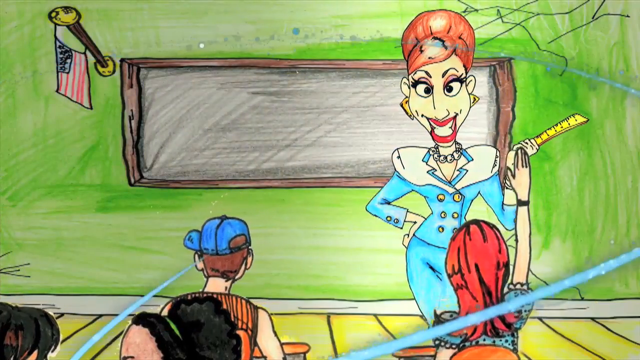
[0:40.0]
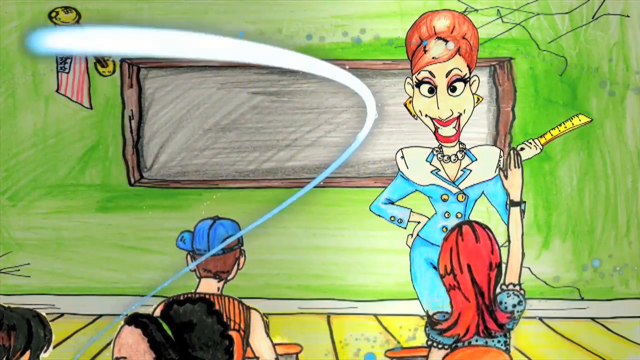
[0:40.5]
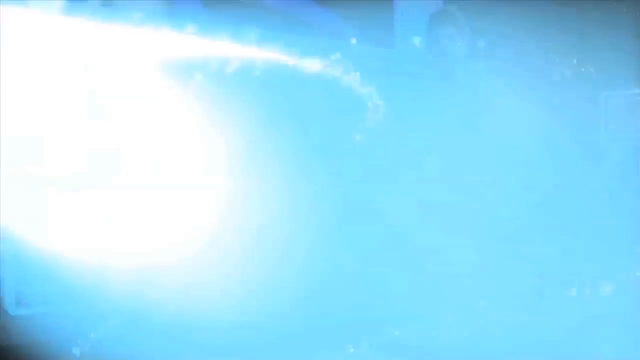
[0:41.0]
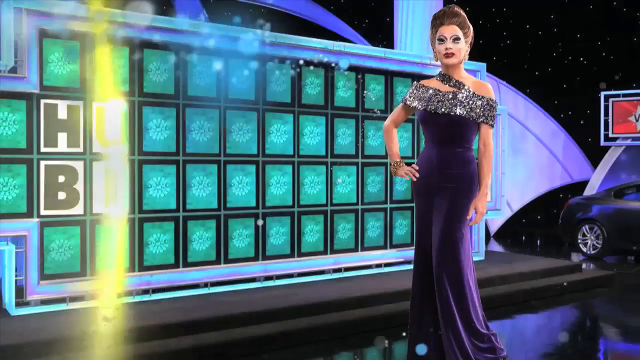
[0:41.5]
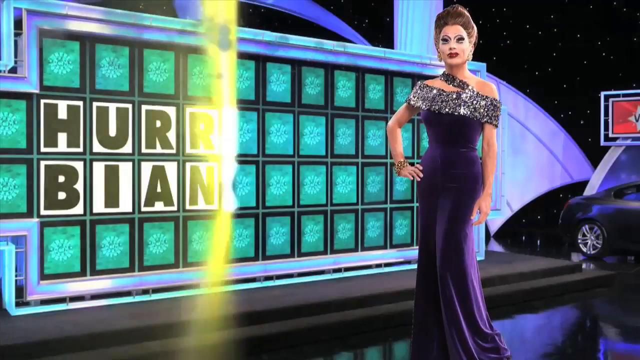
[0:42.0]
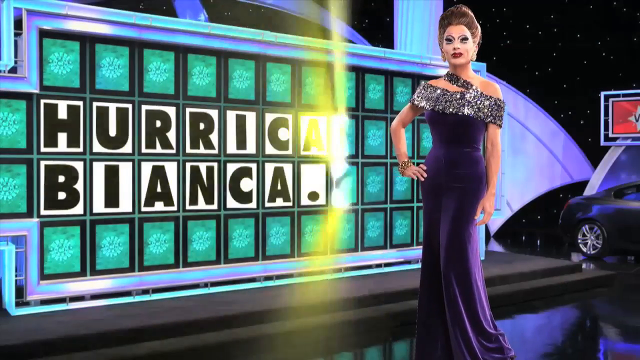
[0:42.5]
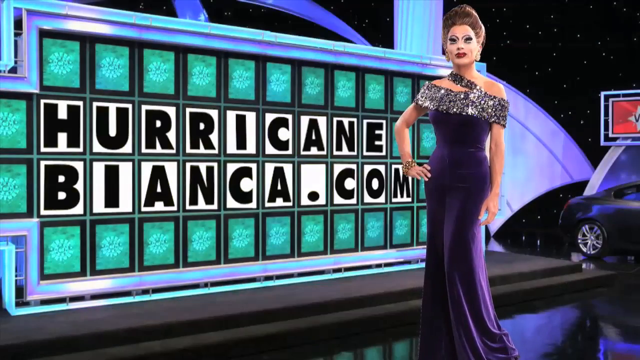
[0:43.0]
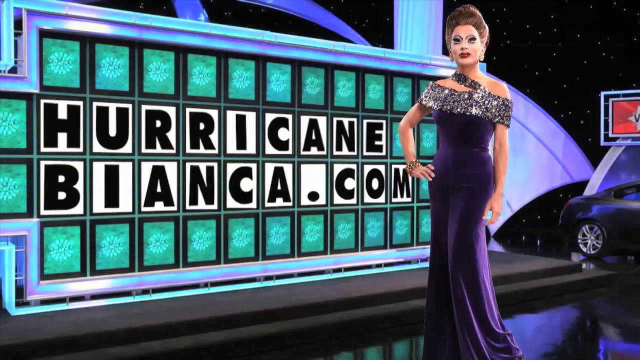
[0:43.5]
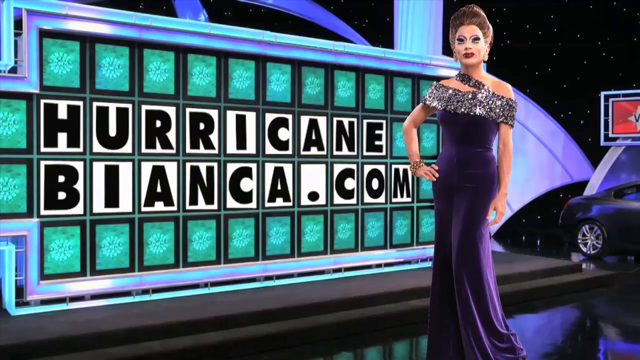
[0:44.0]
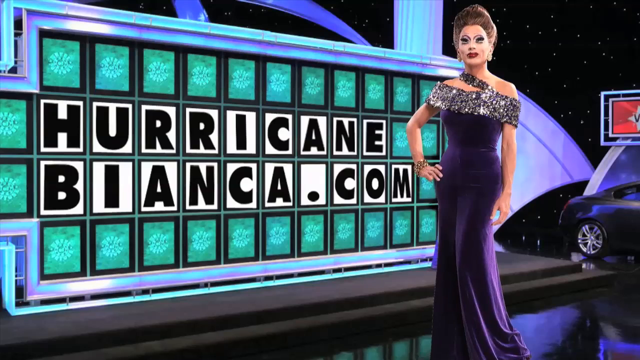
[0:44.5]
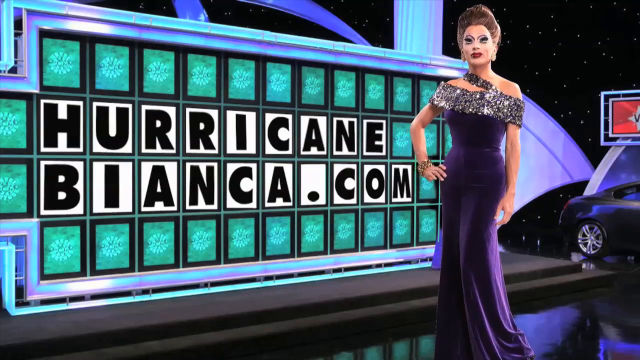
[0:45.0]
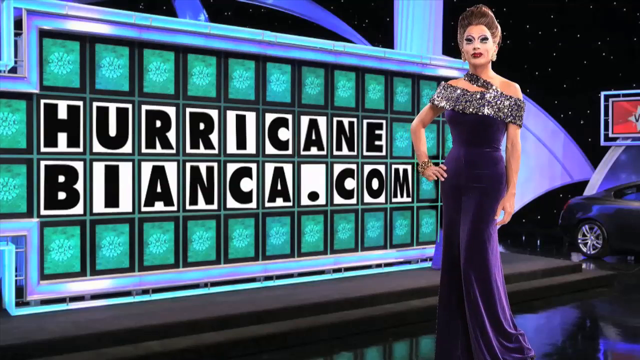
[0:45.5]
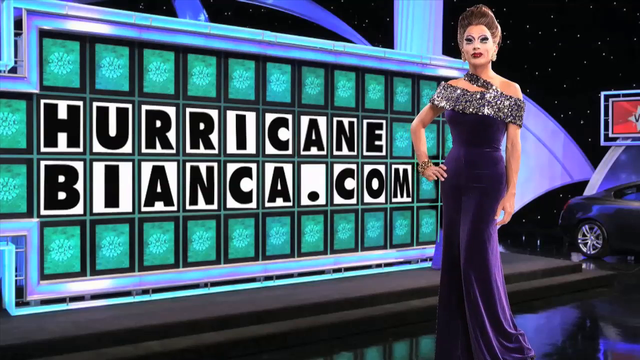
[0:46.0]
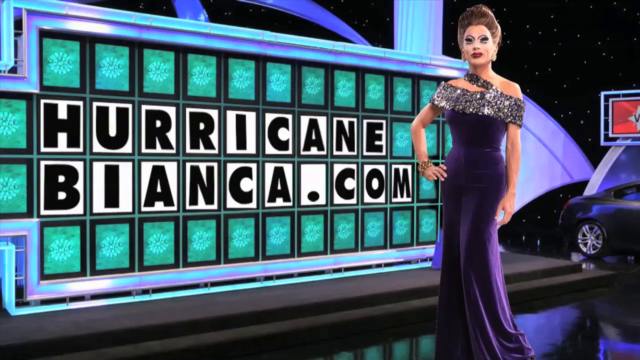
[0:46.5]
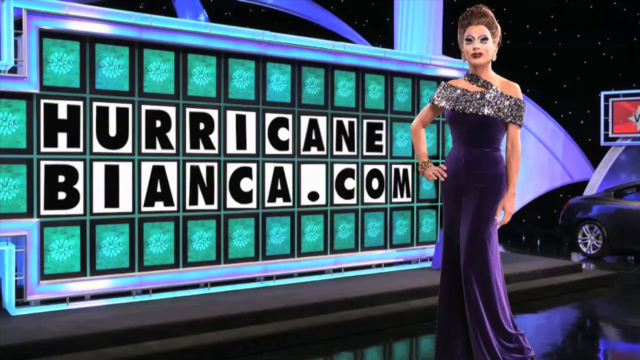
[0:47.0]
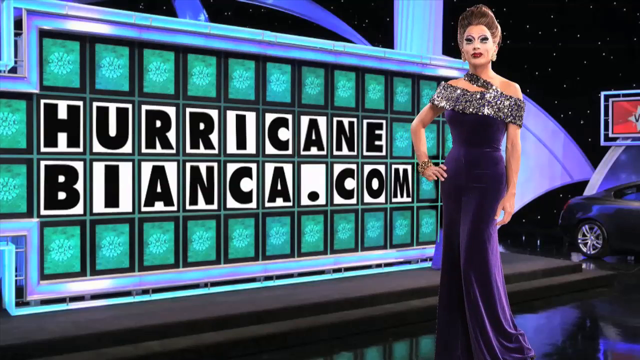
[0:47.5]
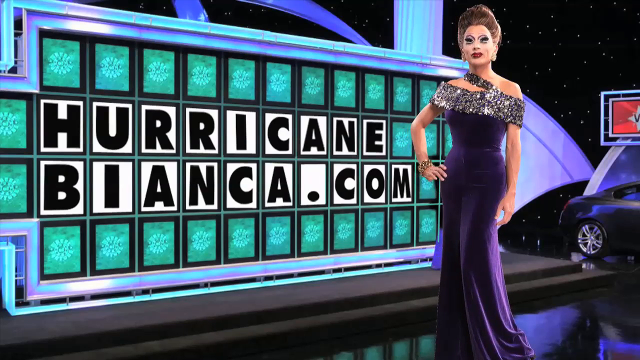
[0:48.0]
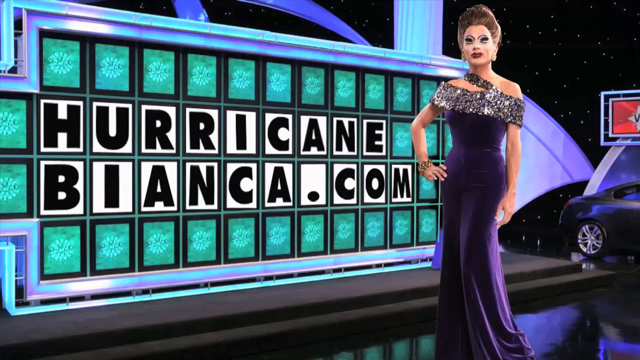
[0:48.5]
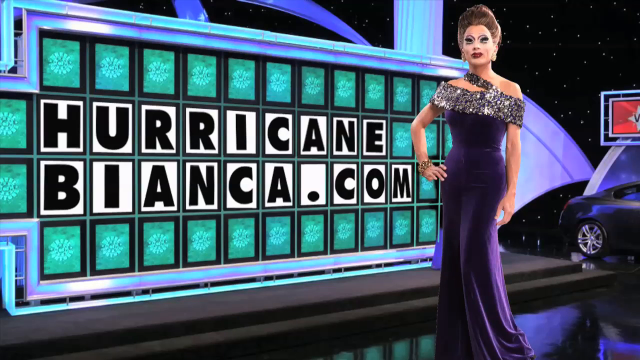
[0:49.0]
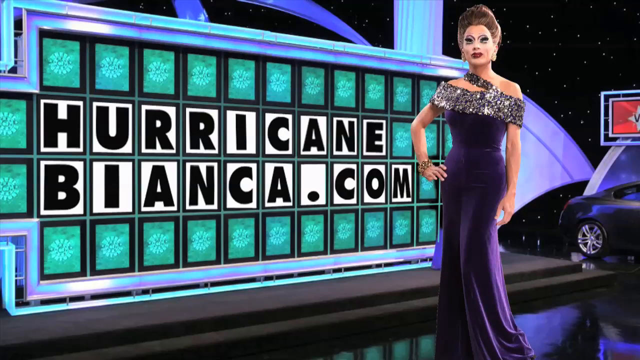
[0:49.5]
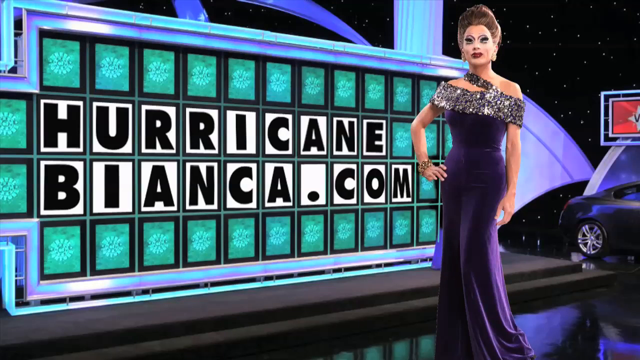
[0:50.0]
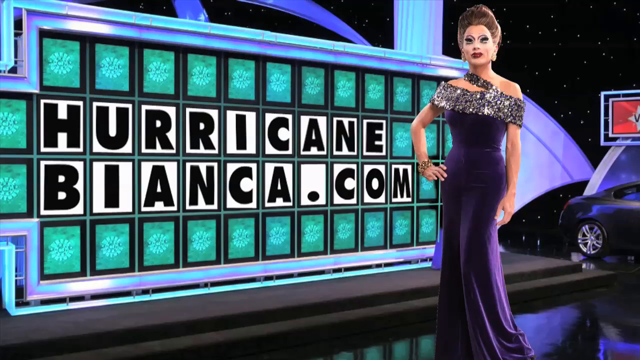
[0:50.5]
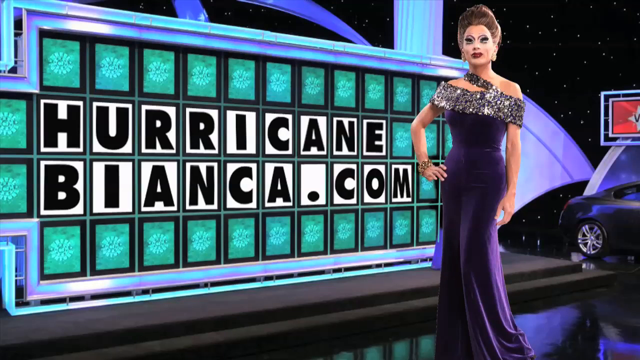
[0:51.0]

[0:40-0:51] The transgender person is maybe teaching a class. An American flag is in the upper left-hand corner, and the person is on the right of the image. Then a Wheel of Fortune appears with the words "Hurricane Bianca" and ".com", with the person on the right side. The way the words and the dot are shown makes it look like the answer to a round of Wheel of Fortune. The end of a black car is visible on the right of the video.